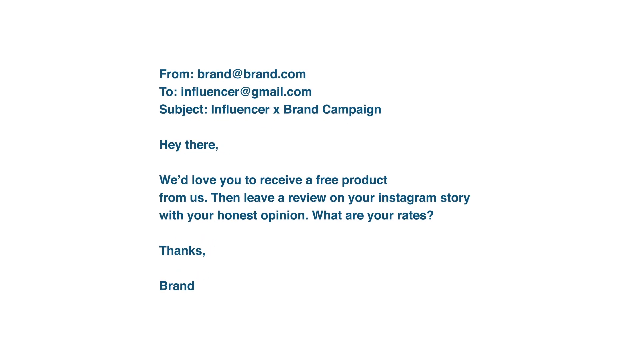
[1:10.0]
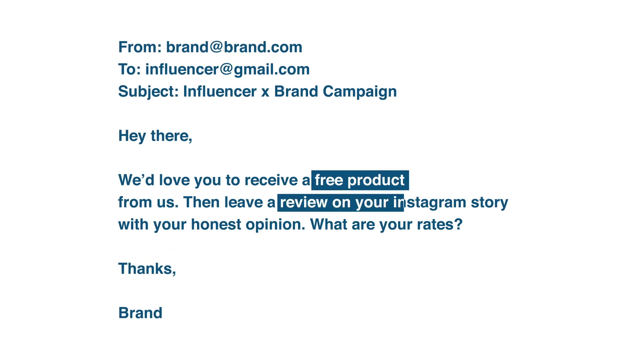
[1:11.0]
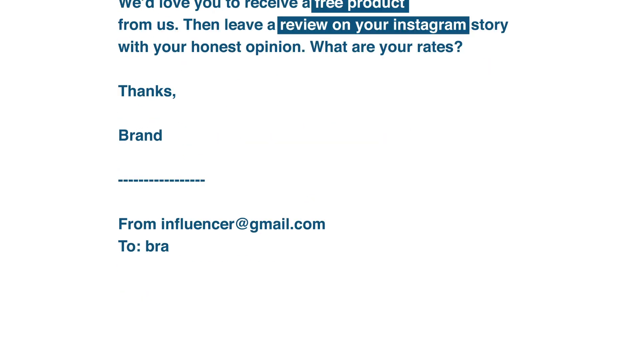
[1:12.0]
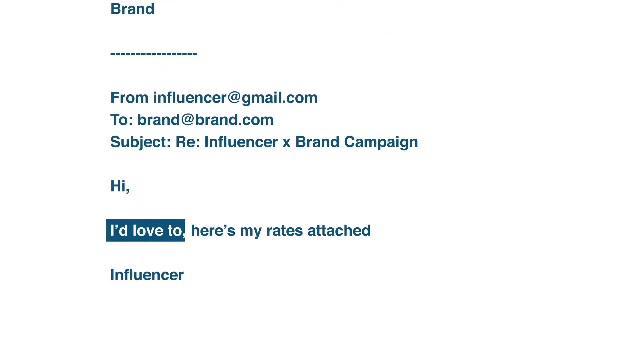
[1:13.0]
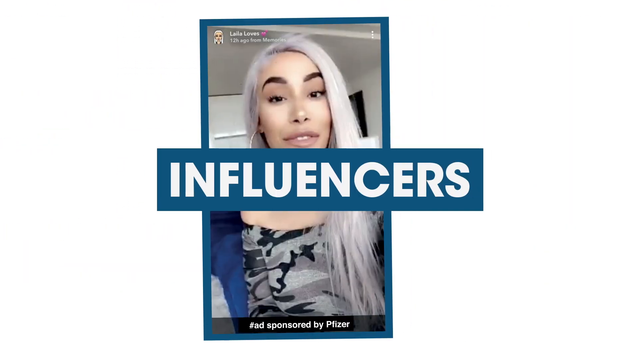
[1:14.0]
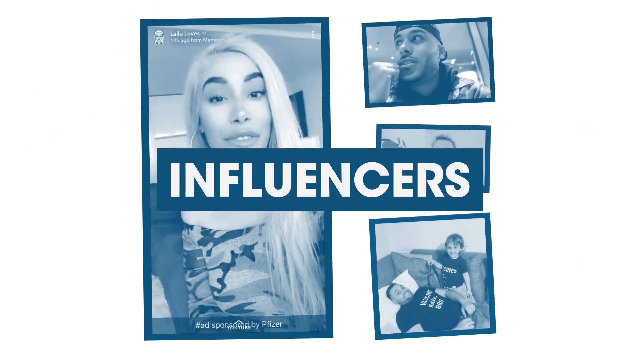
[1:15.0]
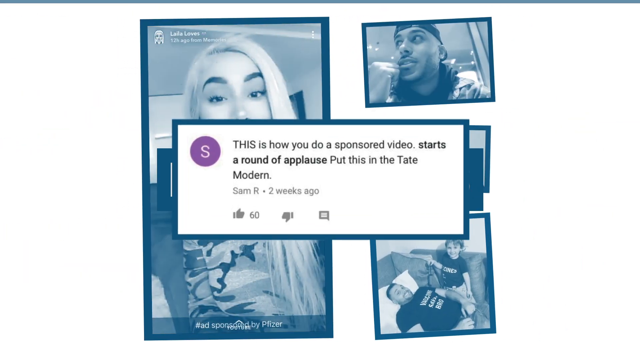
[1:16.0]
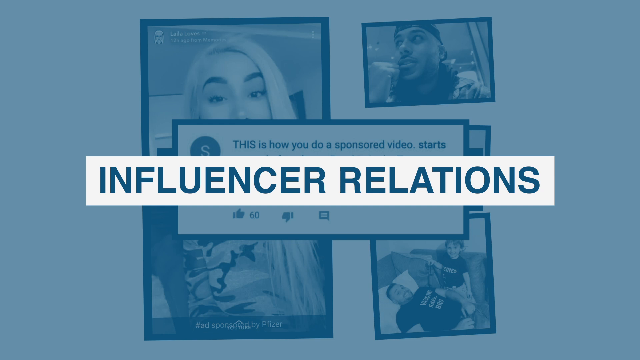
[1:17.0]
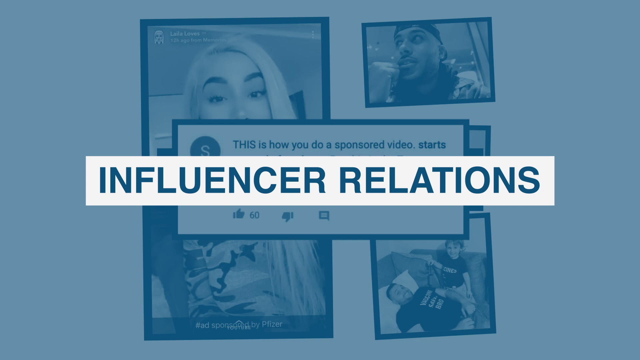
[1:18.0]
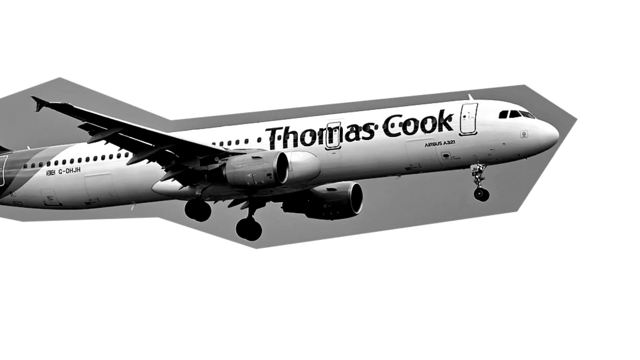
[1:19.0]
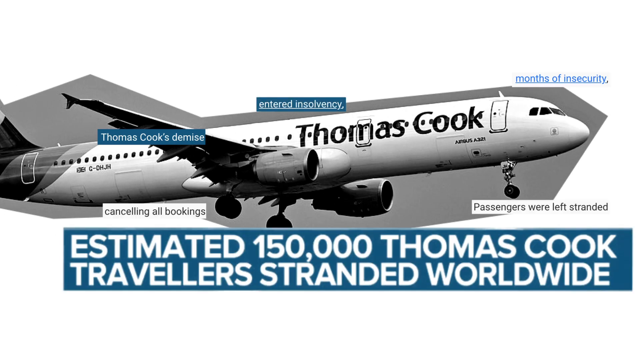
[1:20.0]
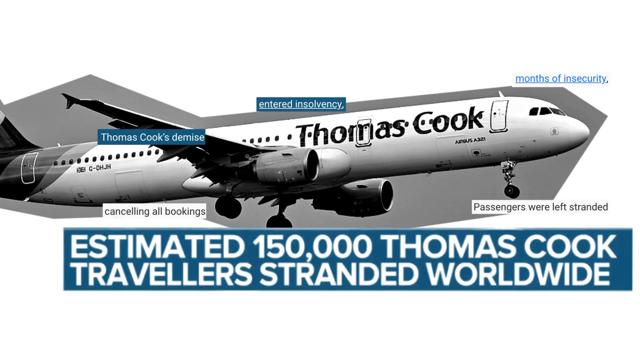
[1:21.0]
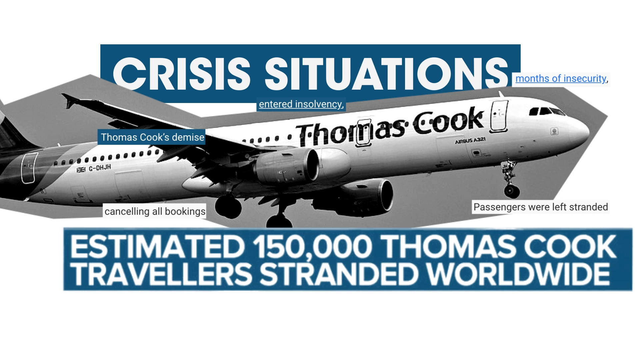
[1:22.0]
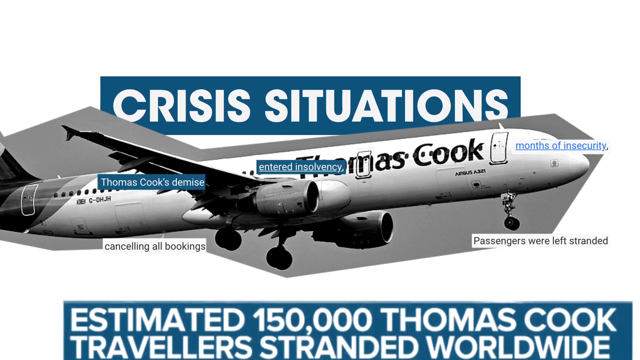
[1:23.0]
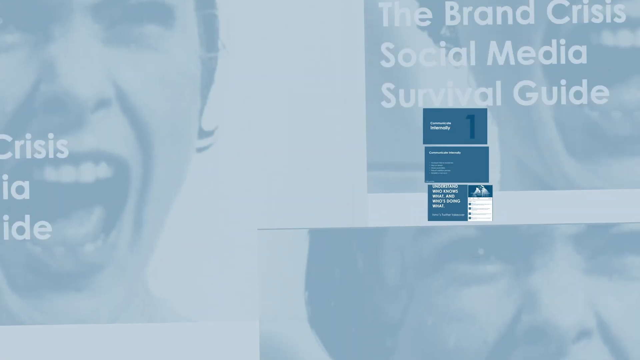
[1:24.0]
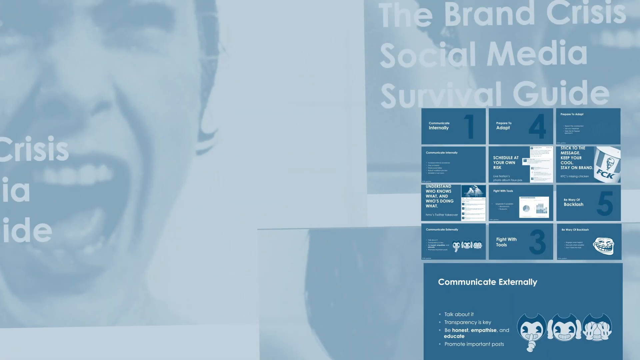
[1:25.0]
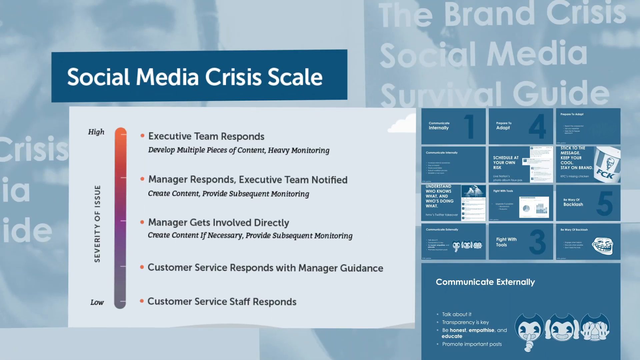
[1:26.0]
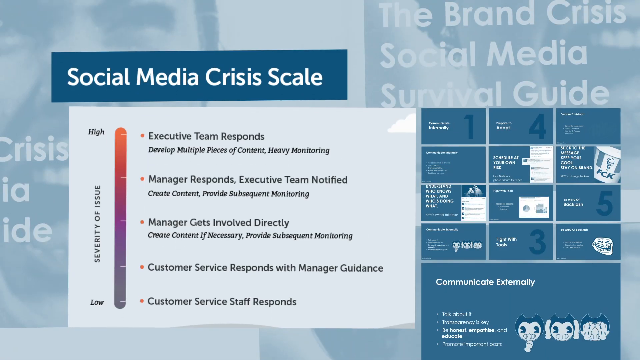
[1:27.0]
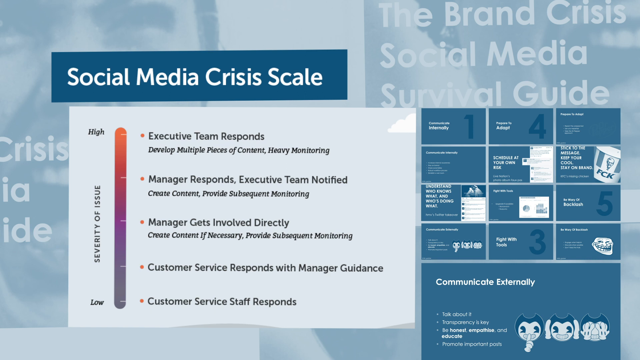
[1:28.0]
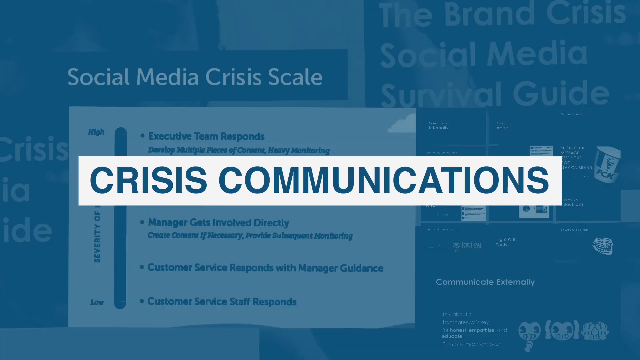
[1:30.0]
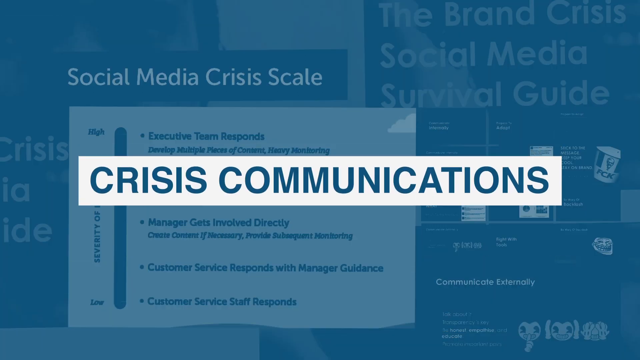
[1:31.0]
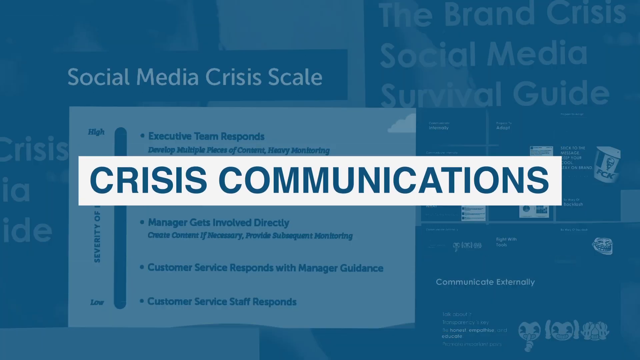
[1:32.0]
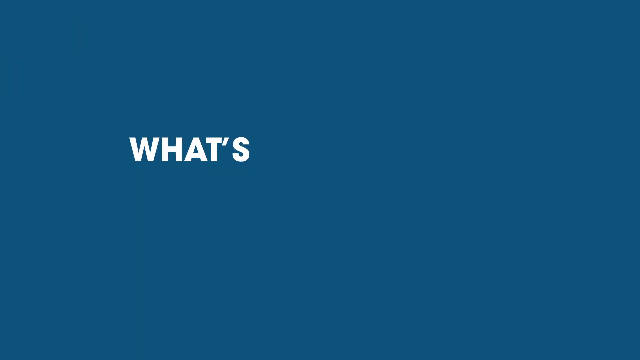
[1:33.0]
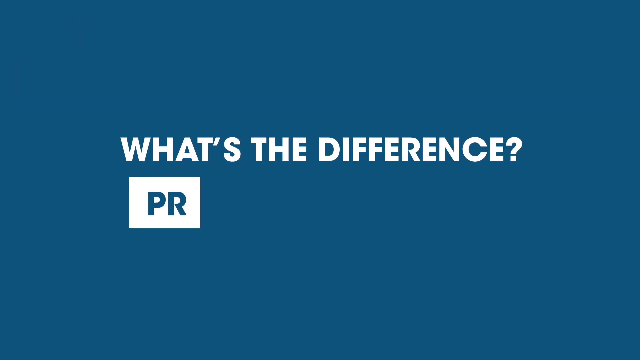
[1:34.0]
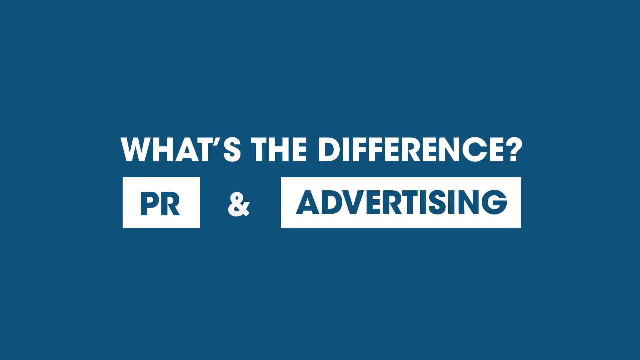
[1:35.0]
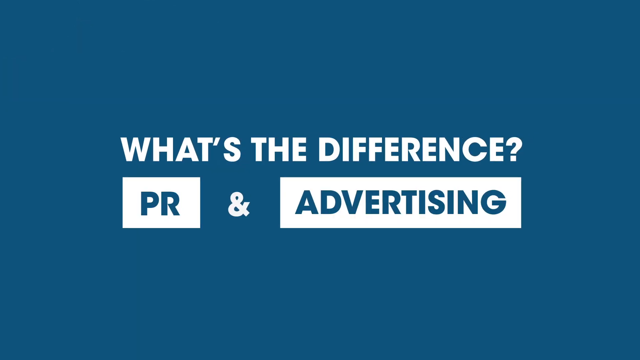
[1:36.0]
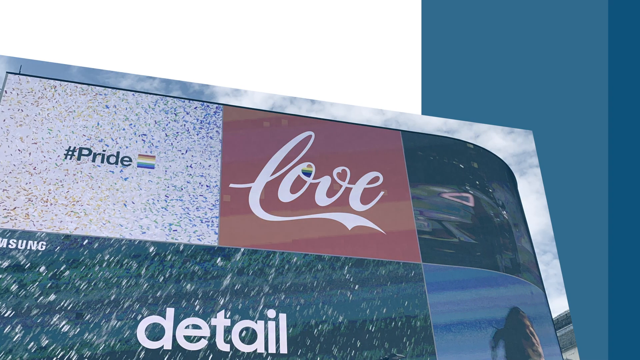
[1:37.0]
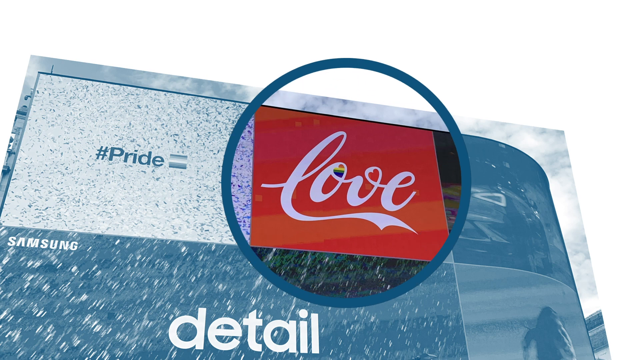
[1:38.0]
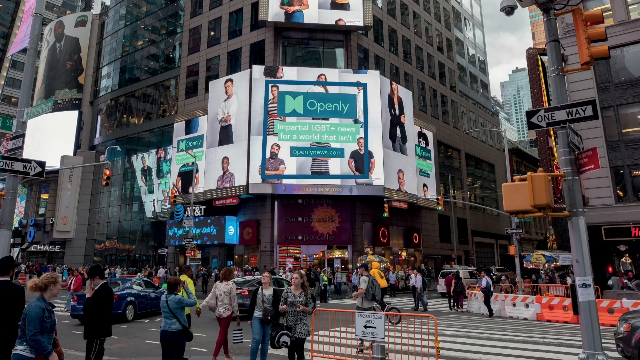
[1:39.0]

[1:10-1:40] An email appears on the screen, from brandinbrand.com to influencer at gmail.com, with the subject "influencer X brand campaign" and the text "hey there I would love you to receive a free product from us then leave a review on your Instagram story with your honest opinion what are your rates thanks brand". A picture of a woman appears with a banner that says "influencers". Many people show pictures, including a man with a child and another man, apparently advertising a clothing brand. A message says "this is how you do a sponsored video". An aeroplane is shown with the message "550,000 Thomas Cook travelers stranded worldwide", followed by text about "crisis situations" and a "social media crisis", including "heavy monitoring" and "executive team notified".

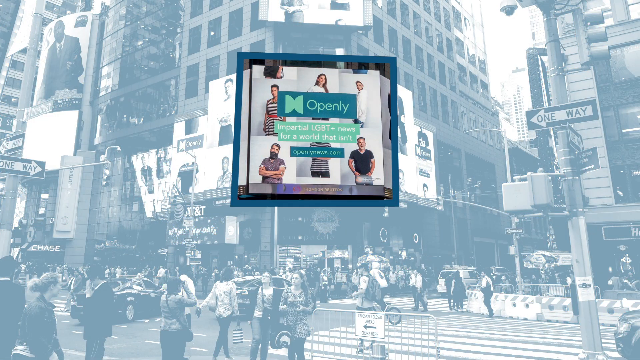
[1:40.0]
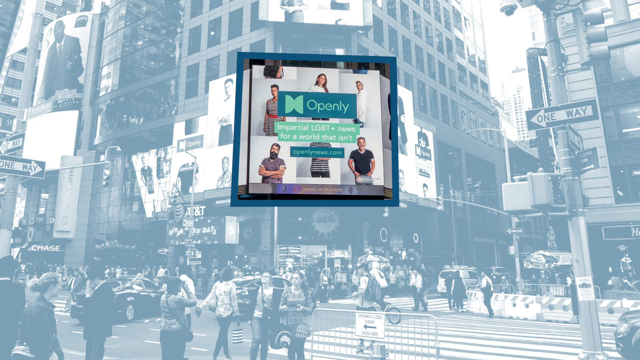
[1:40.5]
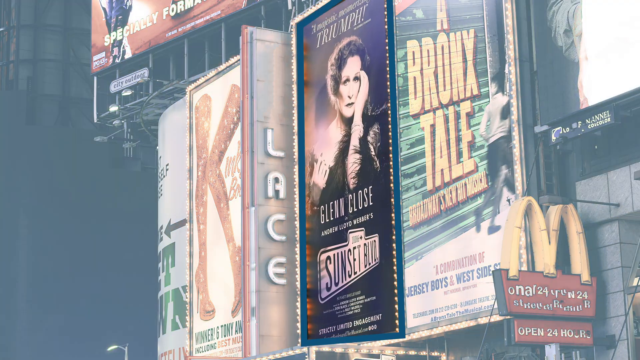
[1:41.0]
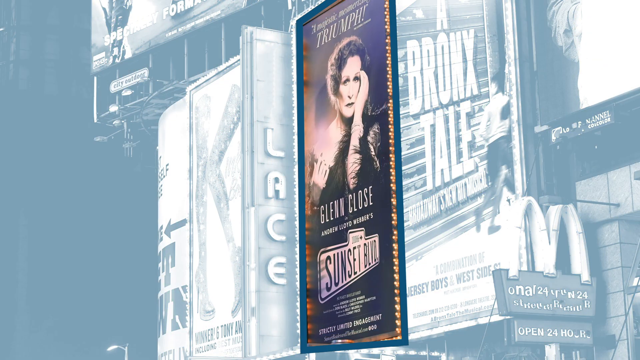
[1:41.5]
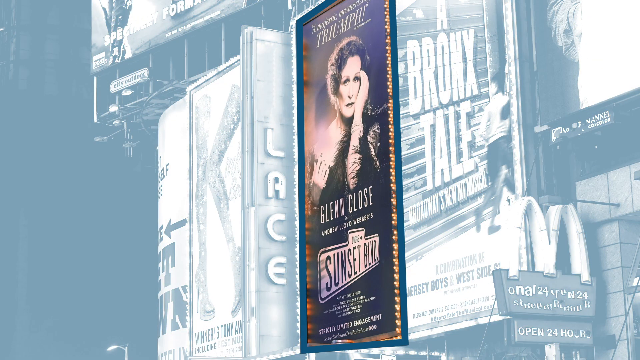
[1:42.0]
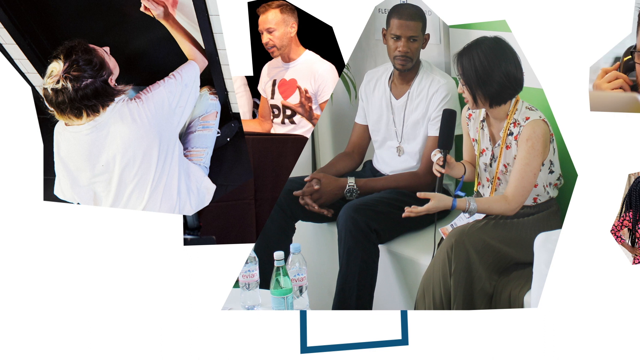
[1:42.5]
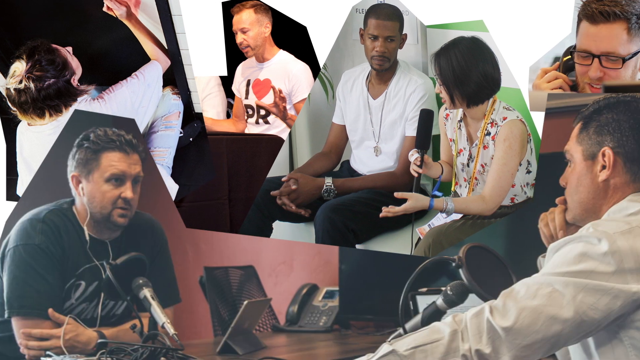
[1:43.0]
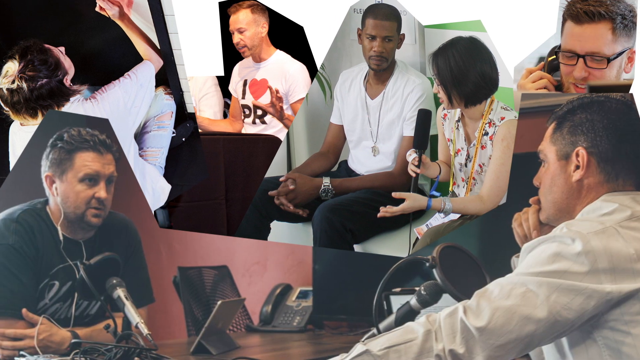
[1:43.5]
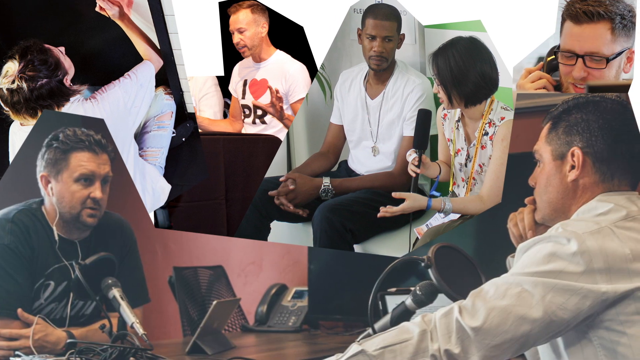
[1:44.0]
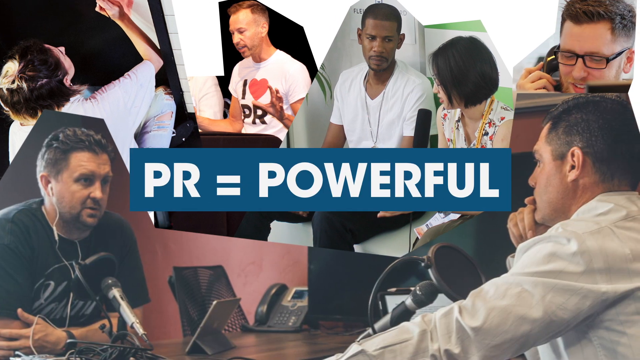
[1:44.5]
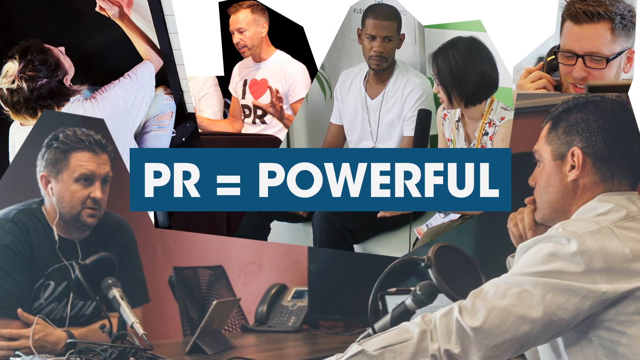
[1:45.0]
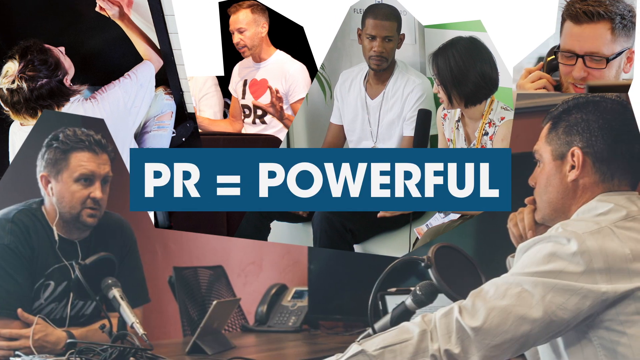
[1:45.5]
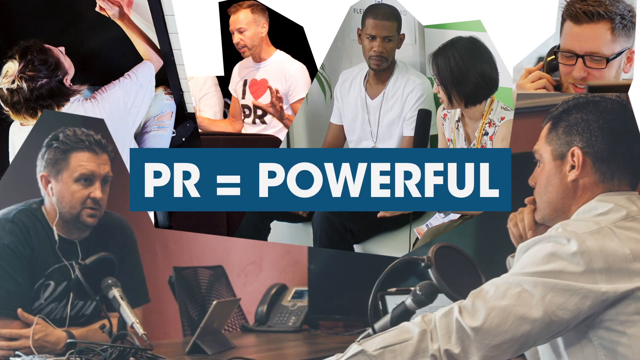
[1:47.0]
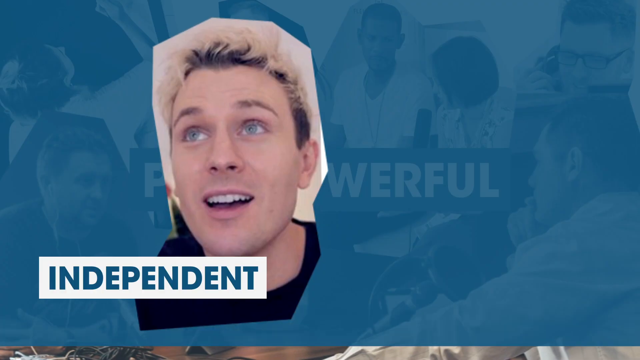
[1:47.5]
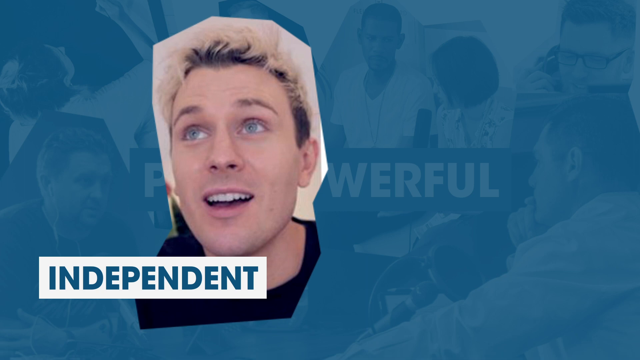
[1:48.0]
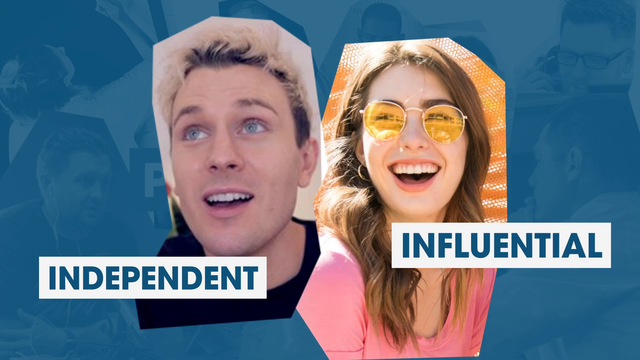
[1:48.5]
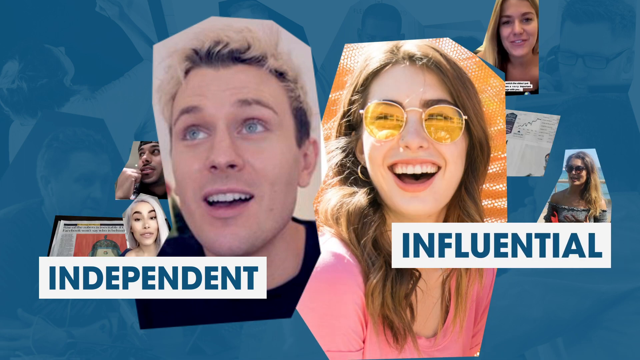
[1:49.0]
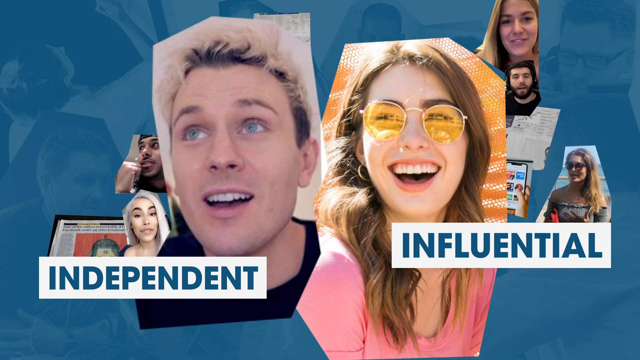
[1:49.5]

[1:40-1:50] Many people walk through the streets of a town with tall buildings. Screens on the buildings show people, and a screen in the center shows seven people, with a message that says "openly". There is a street sign with an arrow showing one way, and another on the left. The screens show pictures of people seated, talking and discussing something. Another picture shows two men at microphones, maybe in a studio, interviewing each other. A young man holds a black microphone and speaks to a man in a white T-shirt, and another man wears a white T-shirt with "I love PR" written on the front. A message then pops up on the screen that says "PR is close to powerful".